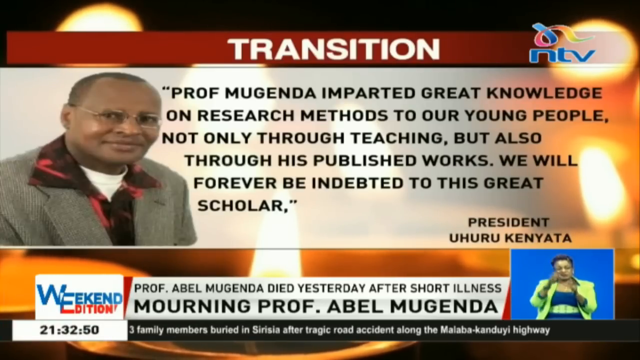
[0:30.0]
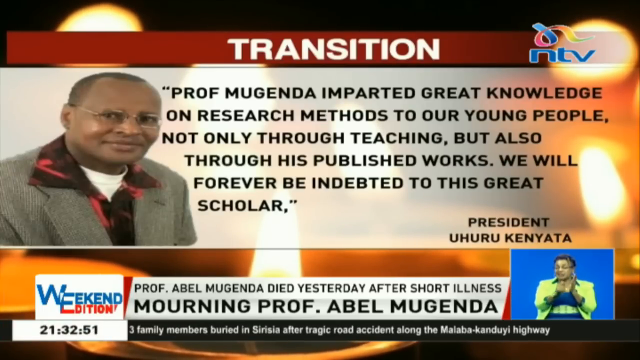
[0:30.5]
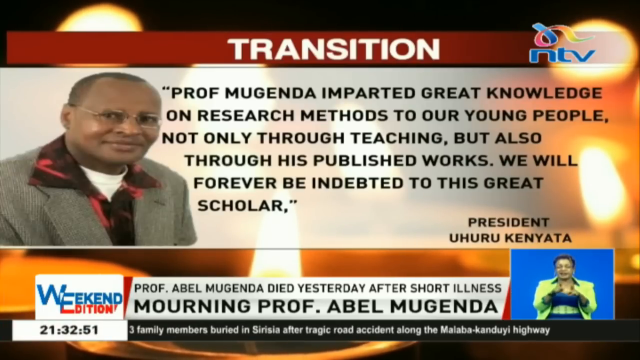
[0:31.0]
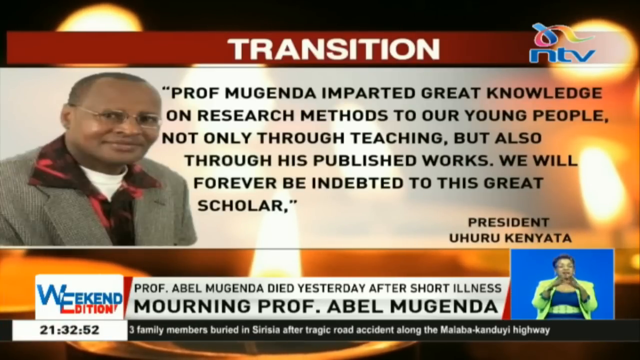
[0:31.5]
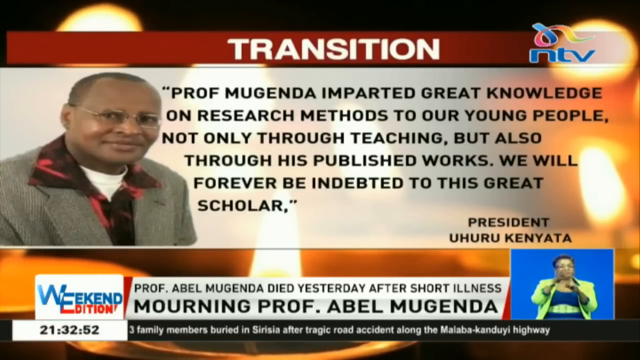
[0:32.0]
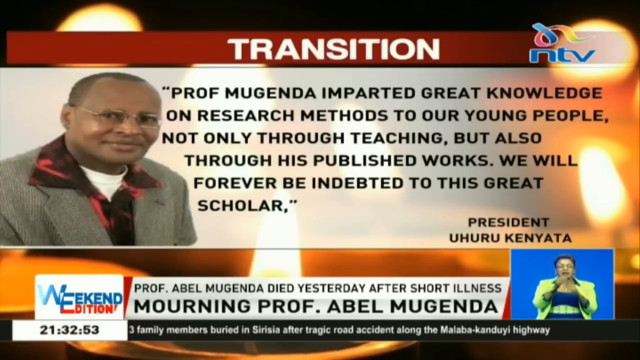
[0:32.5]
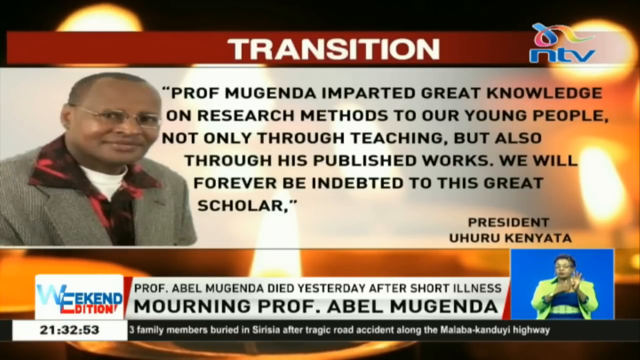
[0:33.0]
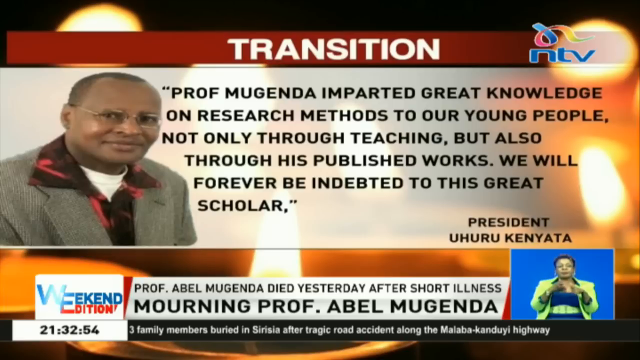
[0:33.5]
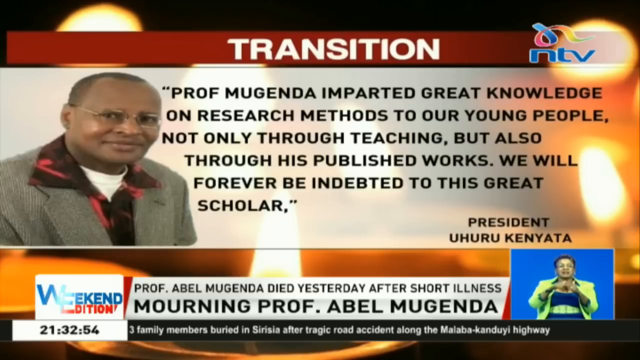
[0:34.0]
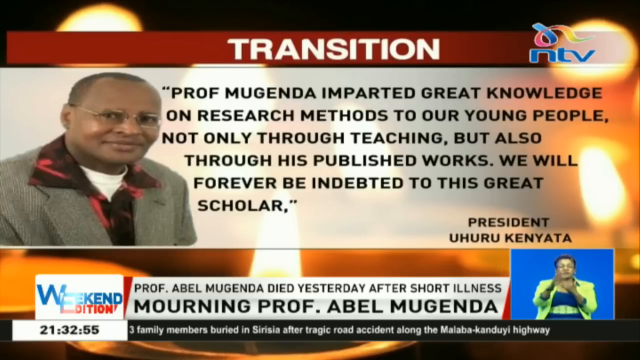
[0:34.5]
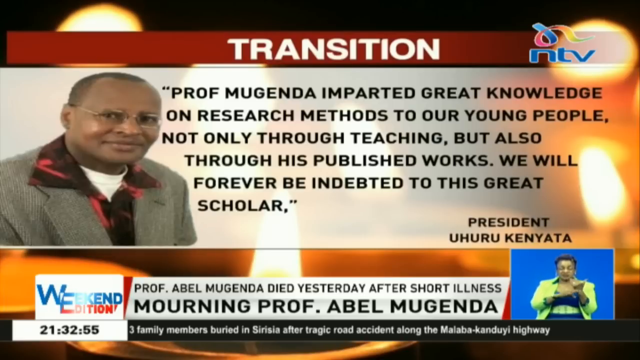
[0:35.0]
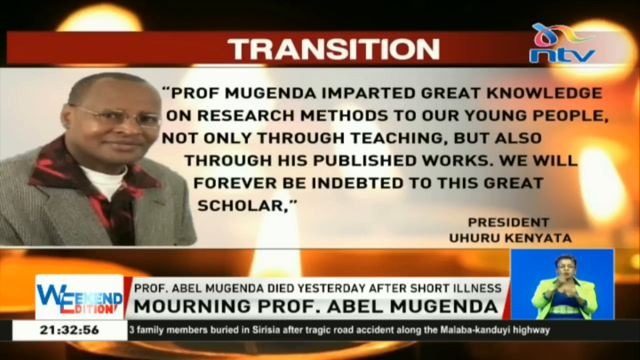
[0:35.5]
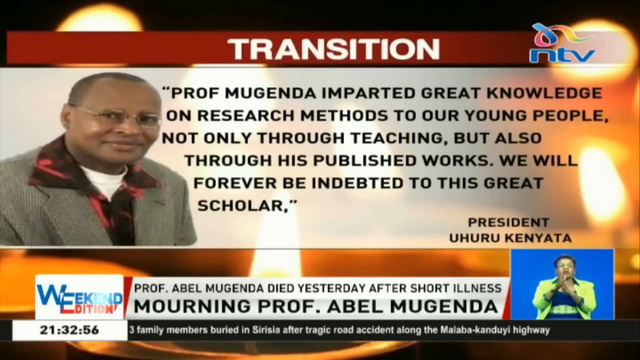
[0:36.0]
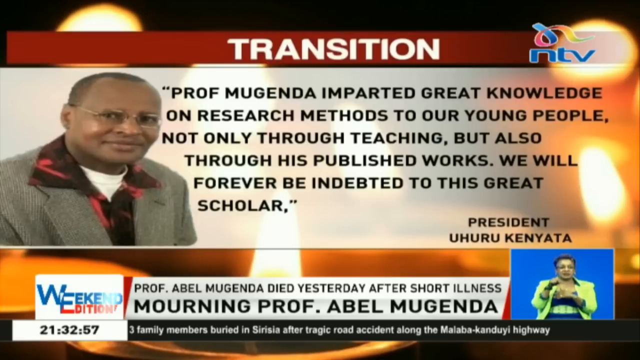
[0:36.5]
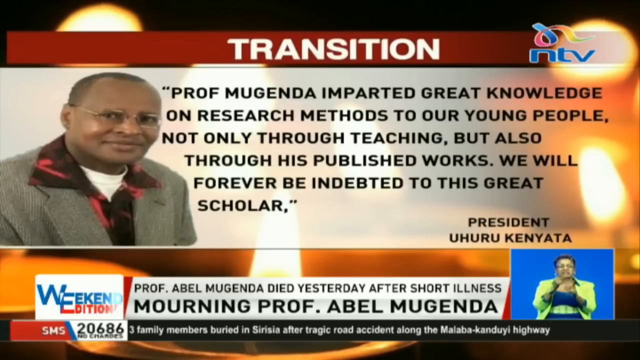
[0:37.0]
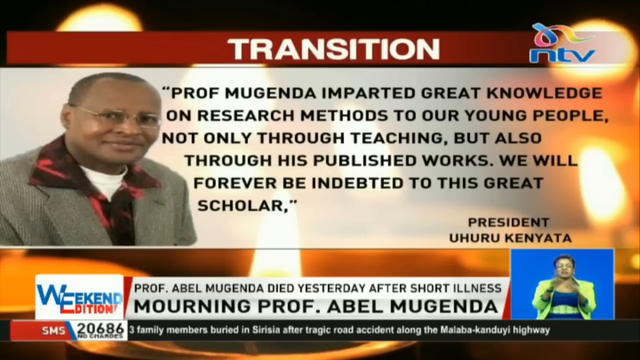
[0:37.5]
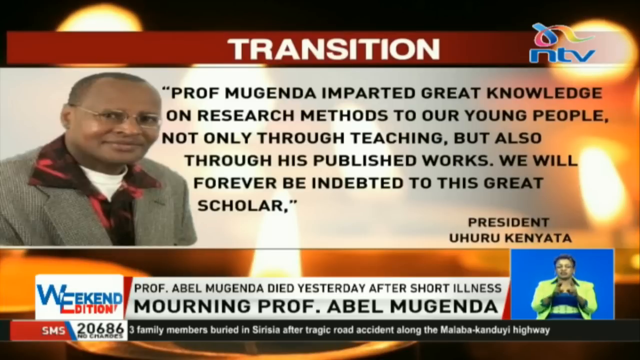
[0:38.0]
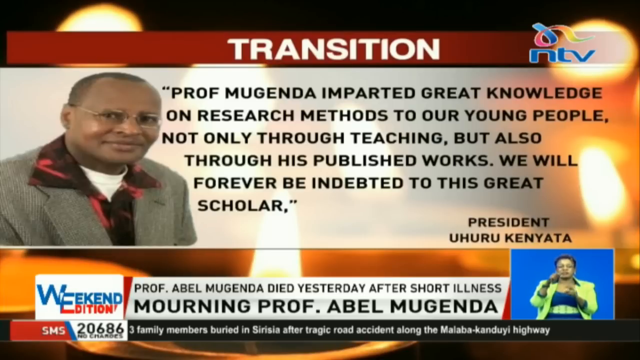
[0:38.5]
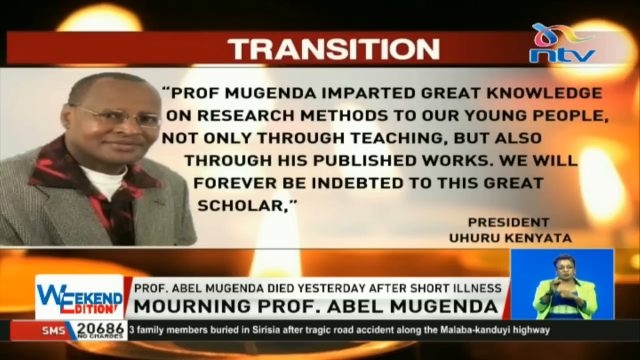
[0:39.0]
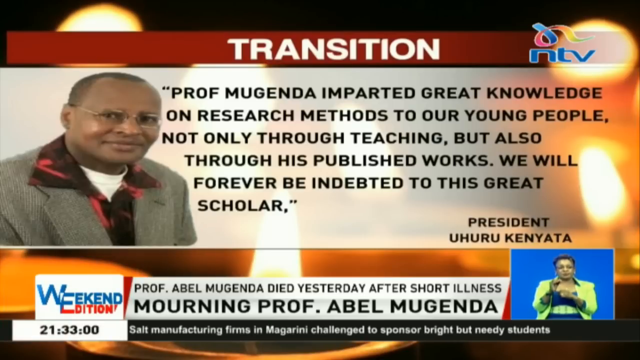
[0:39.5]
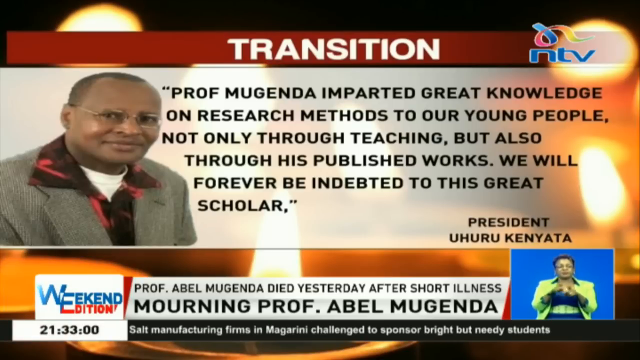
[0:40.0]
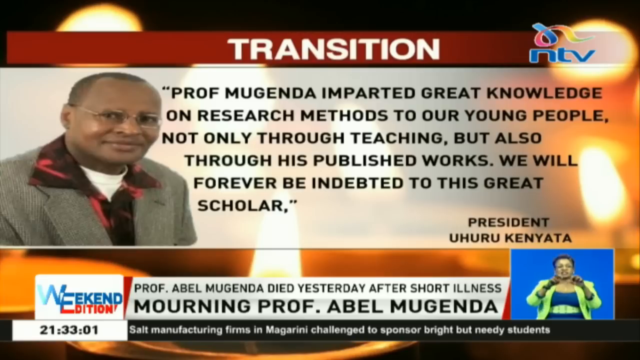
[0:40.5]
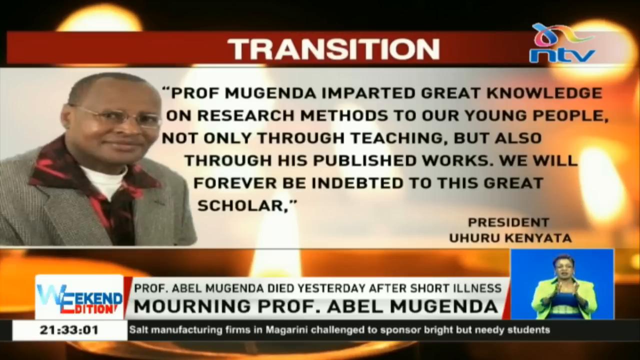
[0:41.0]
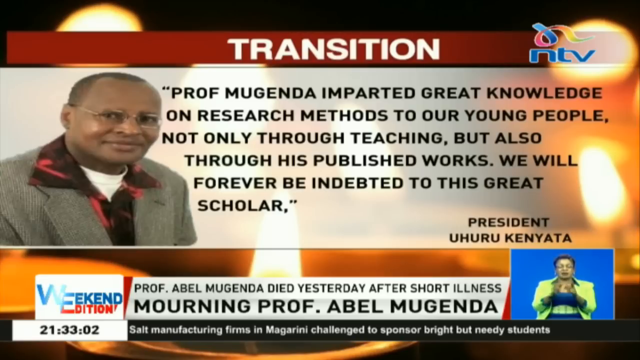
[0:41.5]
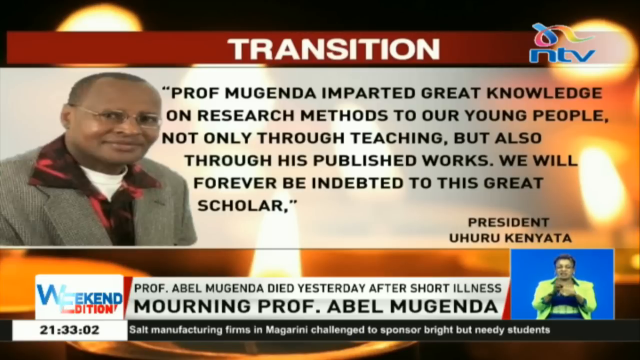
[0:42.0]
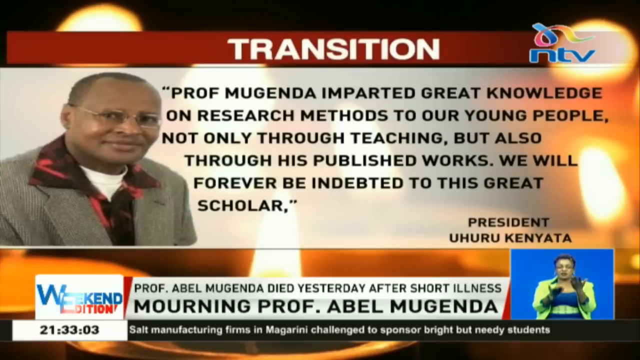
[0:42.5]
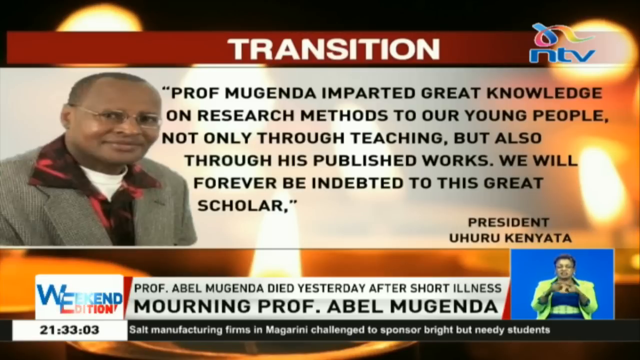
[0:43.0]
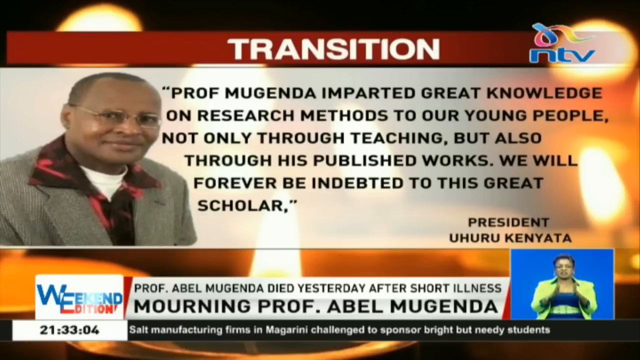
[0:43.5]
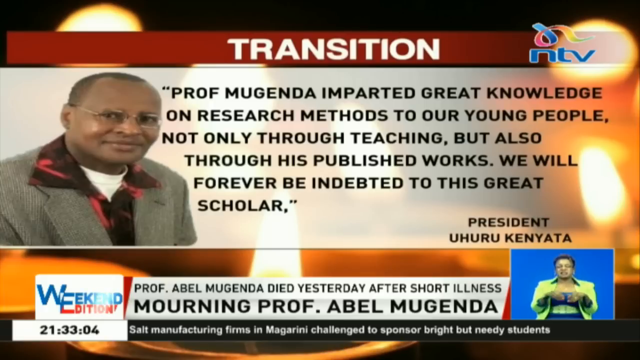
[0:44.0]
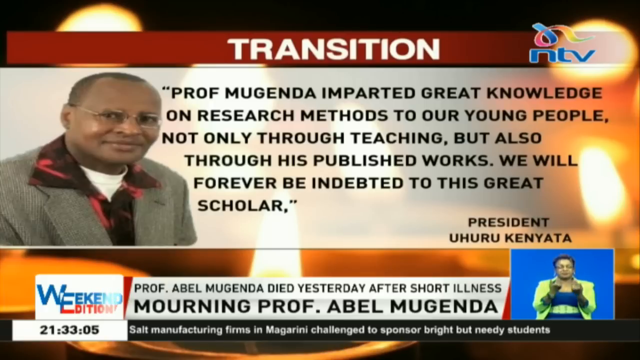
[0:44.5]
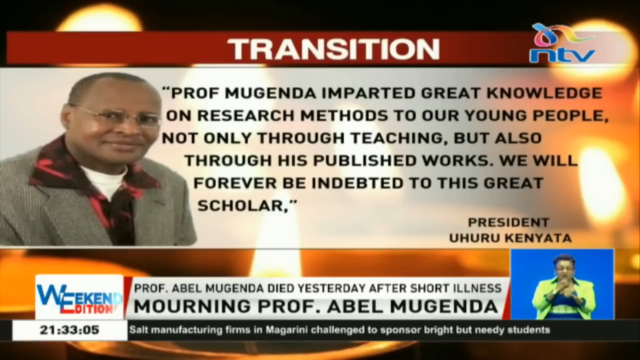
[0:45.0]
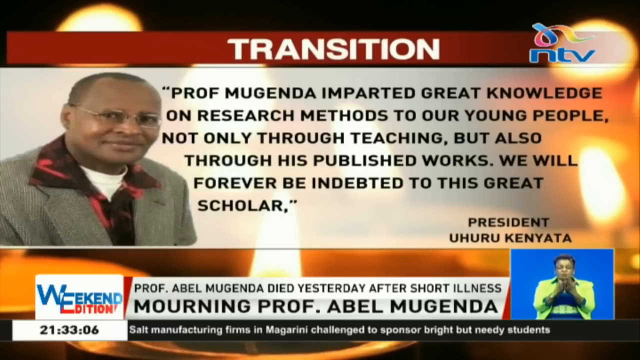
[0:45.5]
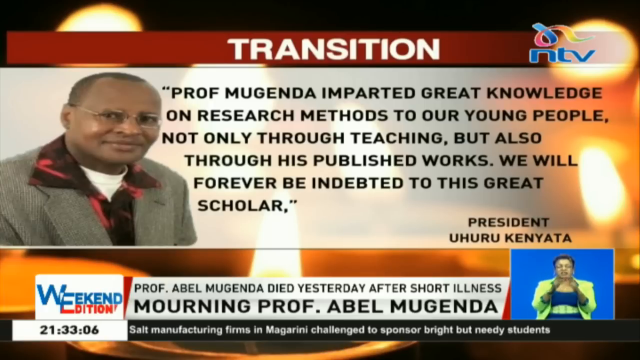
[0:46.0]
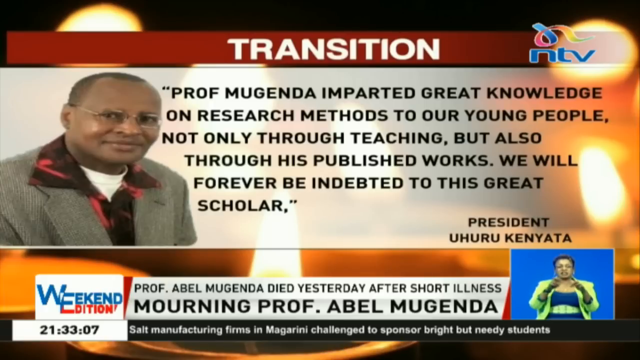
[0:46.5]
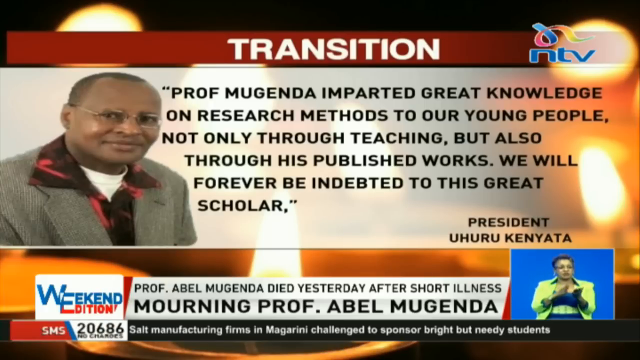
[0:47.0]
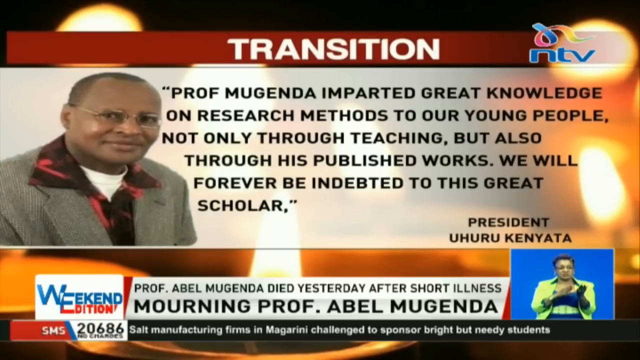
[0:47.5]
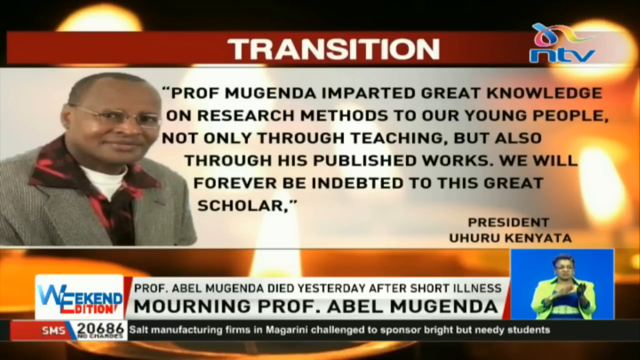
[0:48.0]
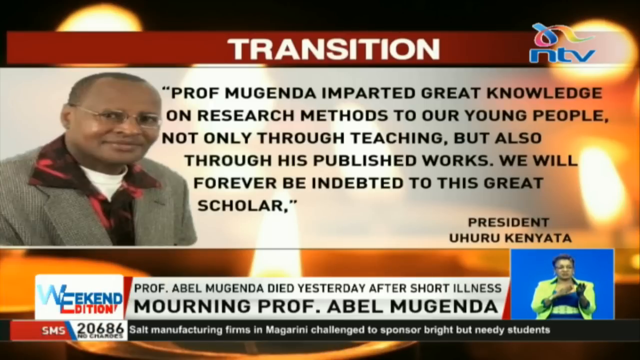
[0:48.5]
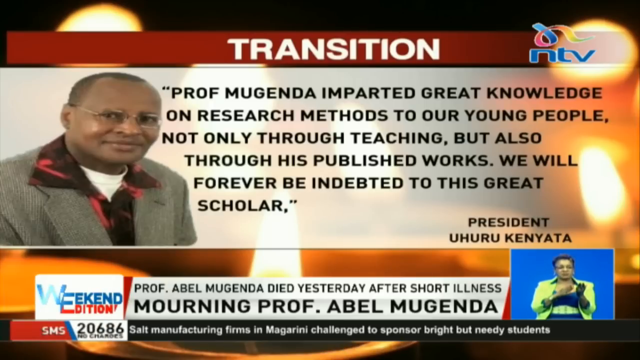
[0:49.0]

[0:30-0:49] A banner at the top says "transition" and concerns President Uhuru Kenyatta and his credentials. The president is on the left and a candle flame is in the bottom right. Other candles burn in the background behind the translucent banner. The text says "Professor Mugenda imparted great knowledge on research methods to our young people, not only through teaching, but also through his published works. We will forever be indebted to this great scholar," and it remains on screen while a person in the lower left-hand corner signs in sign language.